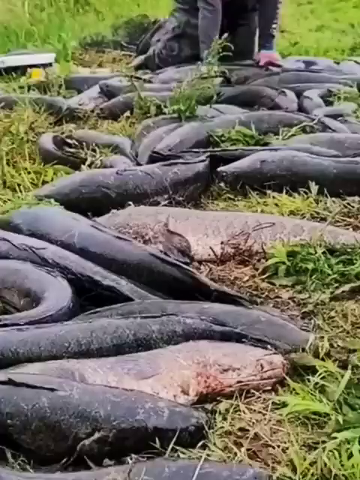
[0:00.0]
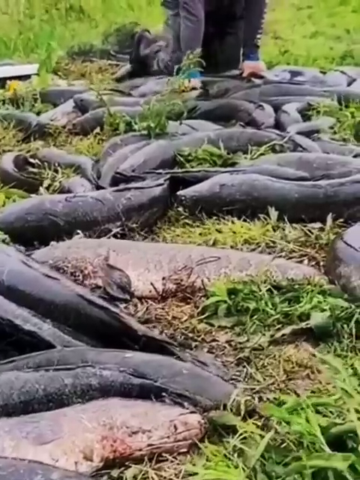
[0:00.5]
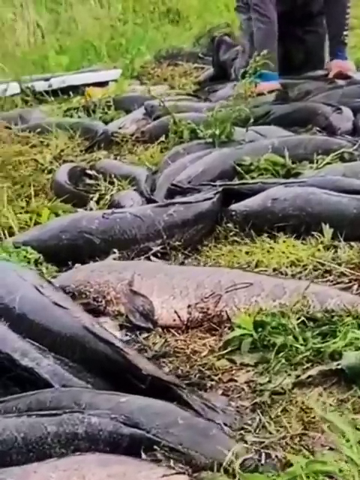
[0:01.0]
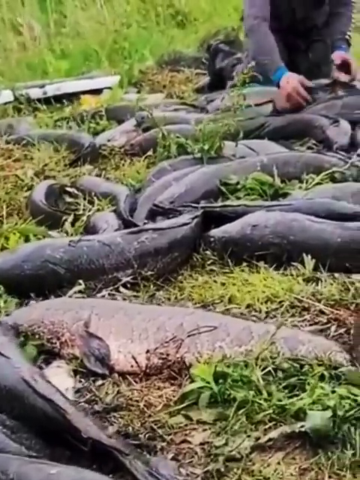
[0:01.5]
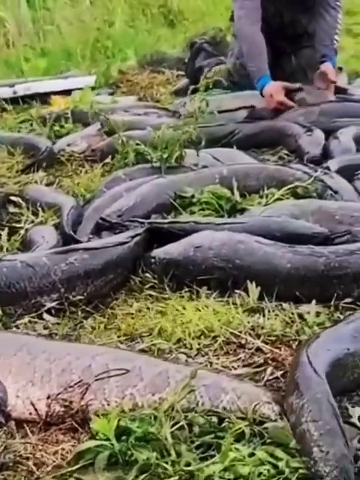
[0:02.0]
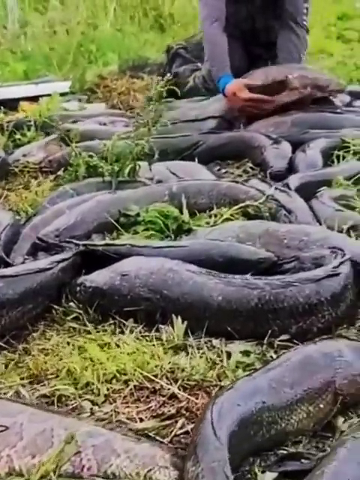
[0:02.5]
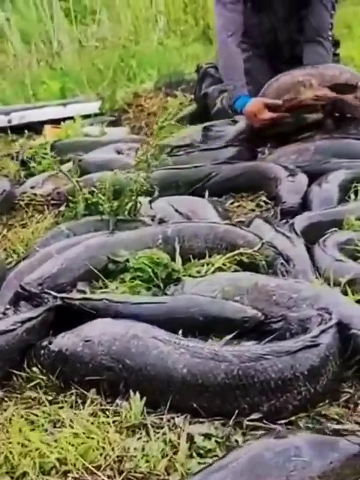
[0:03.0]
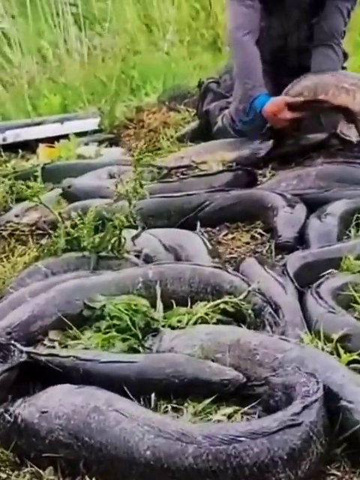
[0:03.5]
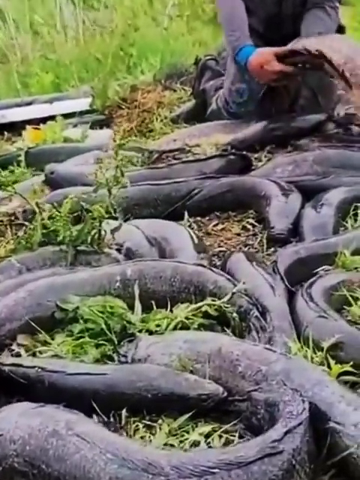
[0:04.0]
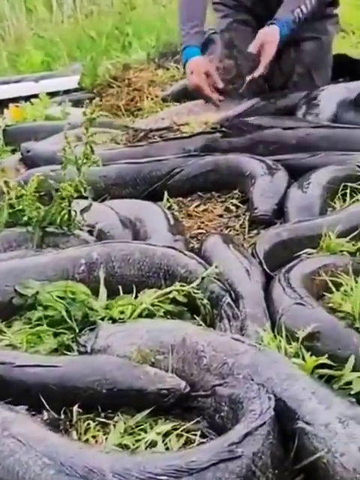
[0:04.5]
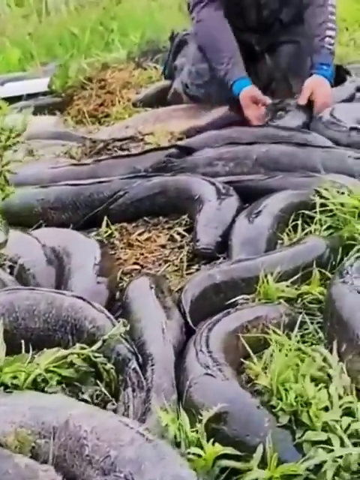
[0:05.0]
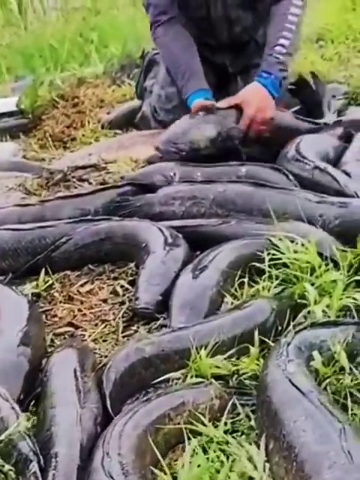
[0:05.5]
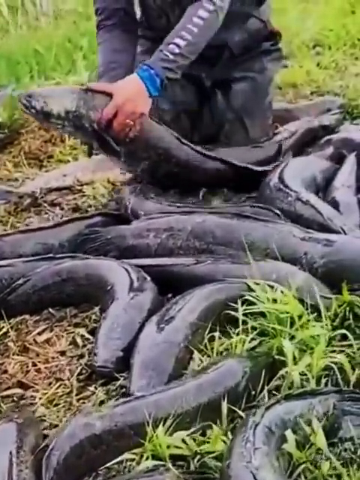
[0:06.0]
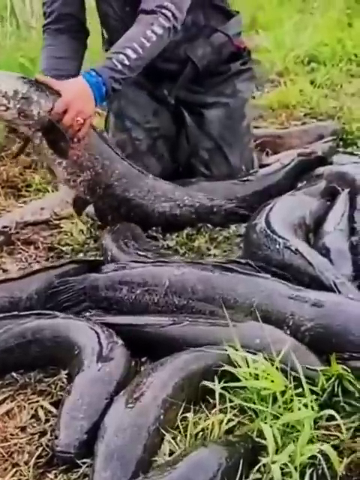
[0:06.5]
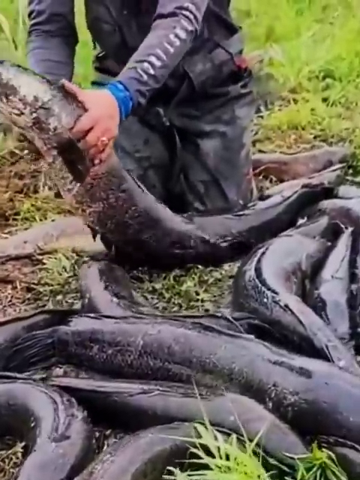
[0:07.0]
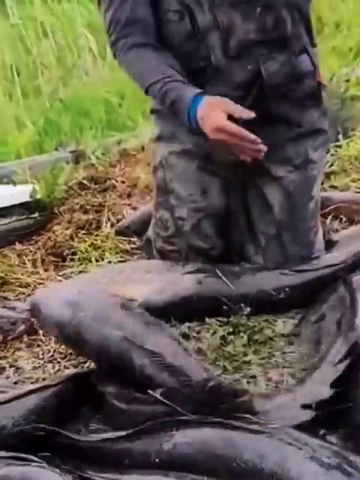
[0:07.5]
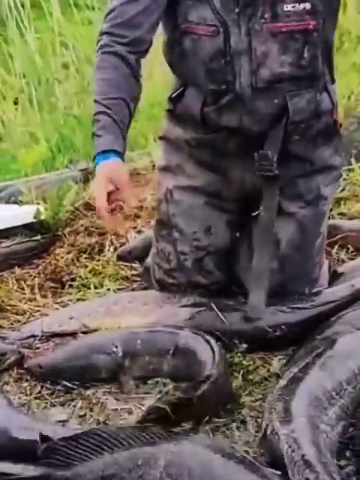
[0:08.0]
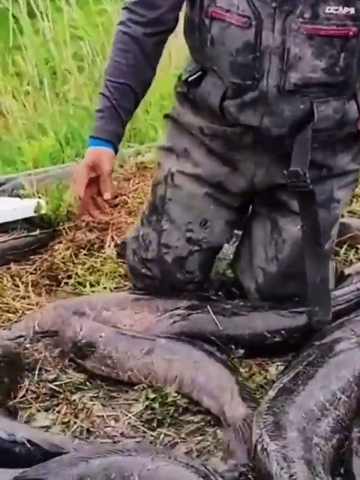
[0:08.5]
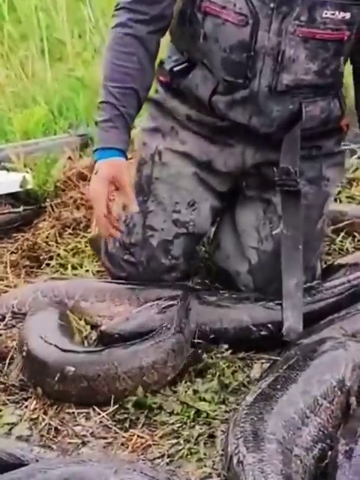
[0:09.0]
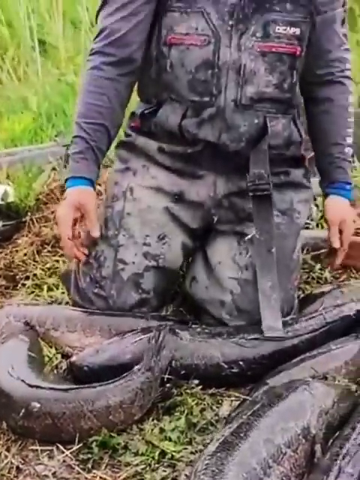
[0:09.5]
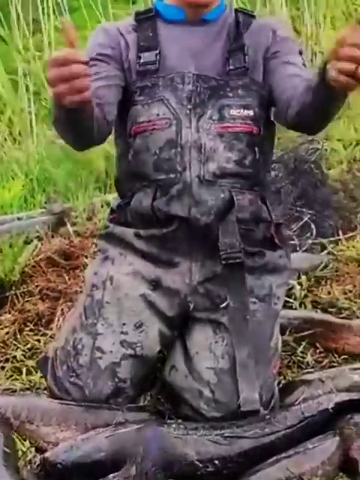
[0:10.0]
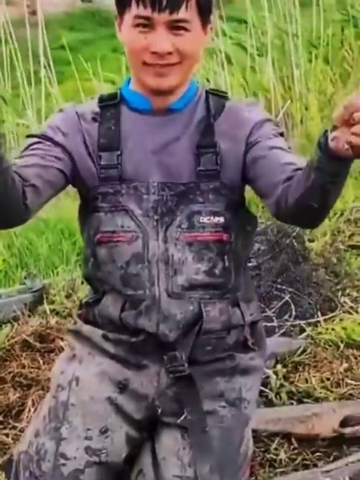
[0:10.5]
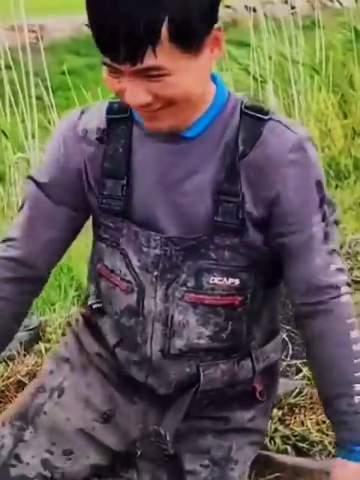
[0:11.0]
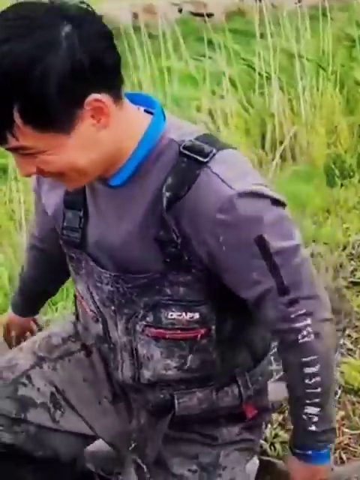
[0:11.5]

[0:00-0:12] The video, titled Snakehead Fishing in Maryland, opens on a bunch of snakehead fish laying on the ground in a grassy area. The spot where they are laid out appears to be a riverbank, probably in summertime, as the grass around it is very green. Dozens of snakehead fish that have been caught in Maryland are there. The camera slowly goes across all the fish laying on the bank. Back behind them is a man in fishing trousers, something like a wetsuit but for fishing. He tries to pick up one of the snakehead fish, but it slips out of his hand, showing that the fish are still alive. He then sort of raises his hands into the air, as if in victory at having caught all of these snakehead fish.